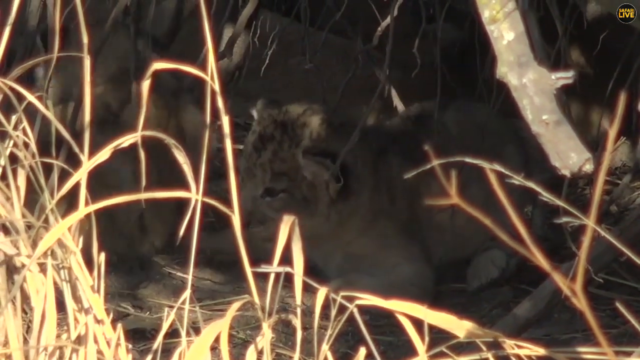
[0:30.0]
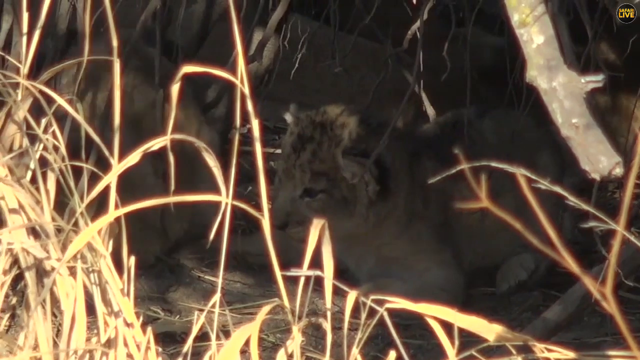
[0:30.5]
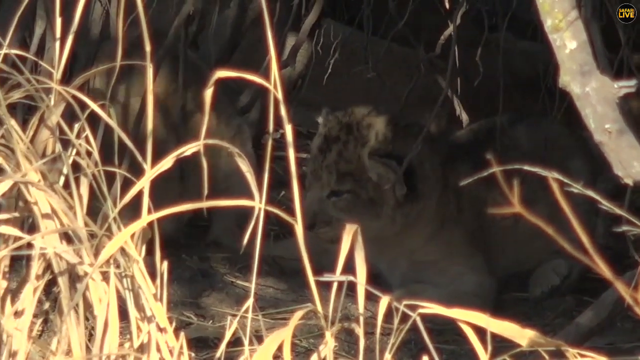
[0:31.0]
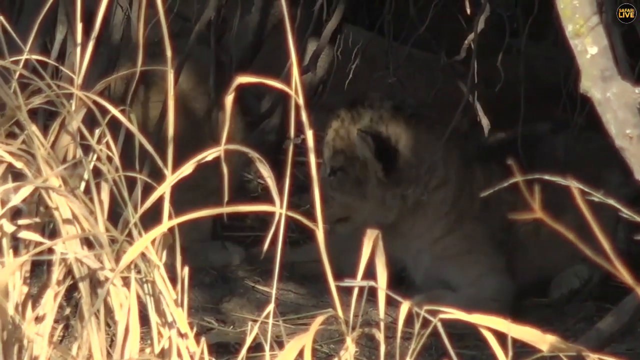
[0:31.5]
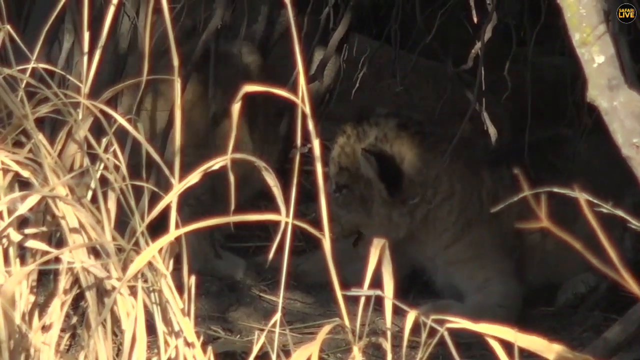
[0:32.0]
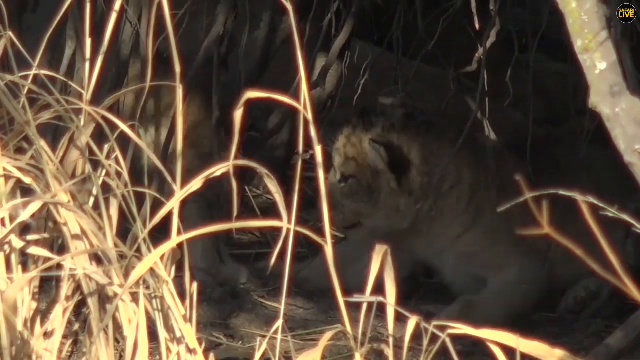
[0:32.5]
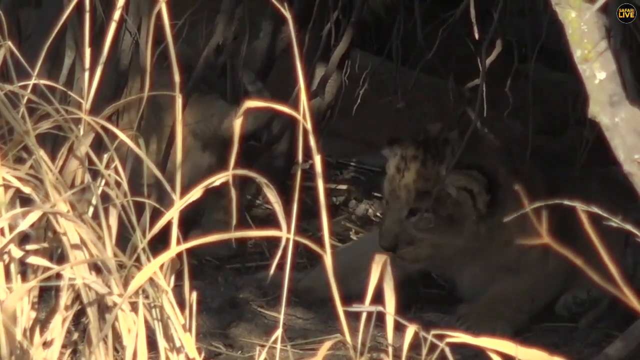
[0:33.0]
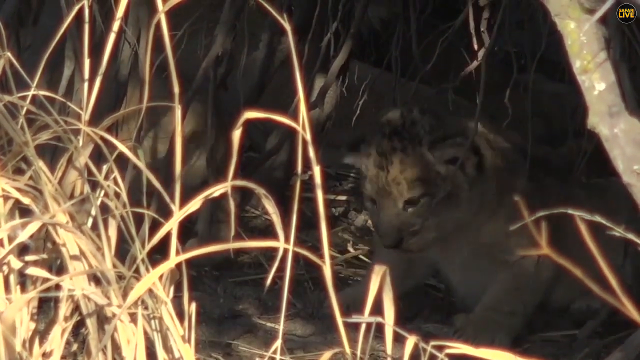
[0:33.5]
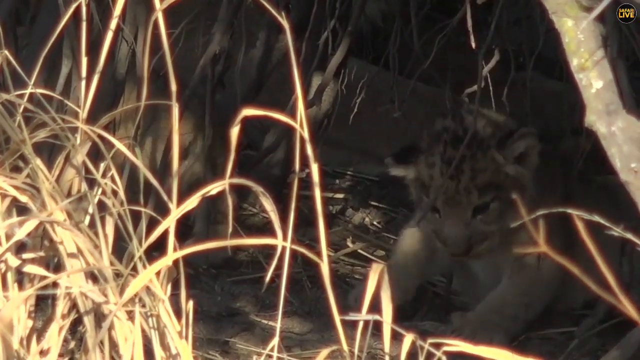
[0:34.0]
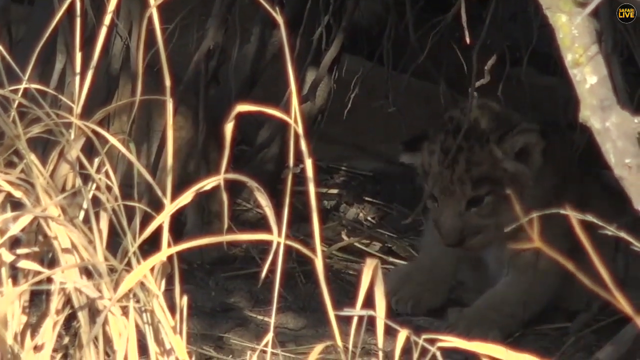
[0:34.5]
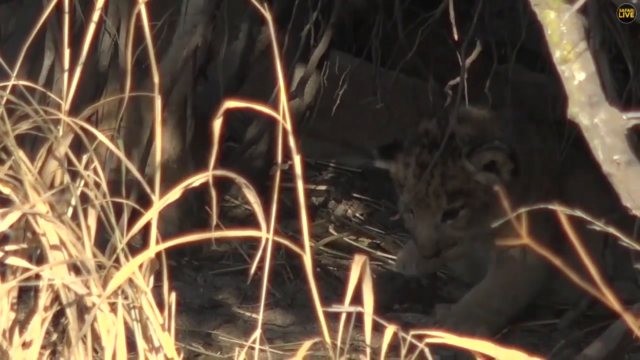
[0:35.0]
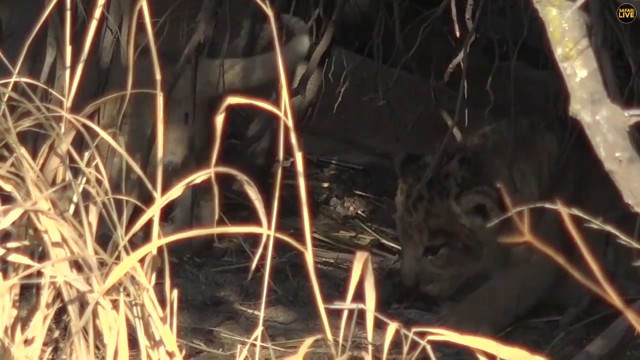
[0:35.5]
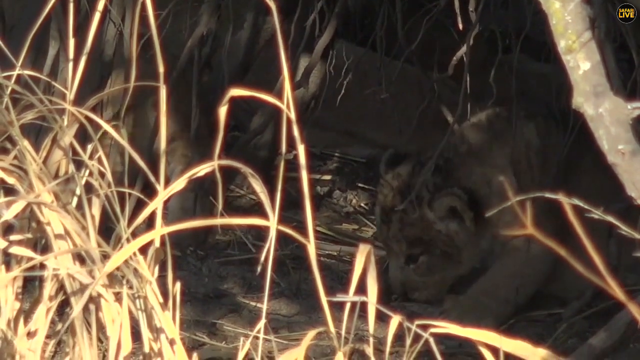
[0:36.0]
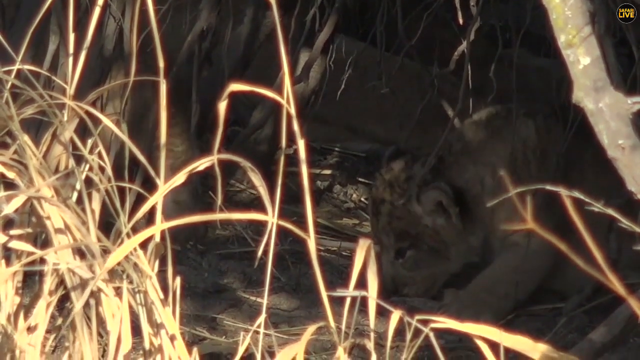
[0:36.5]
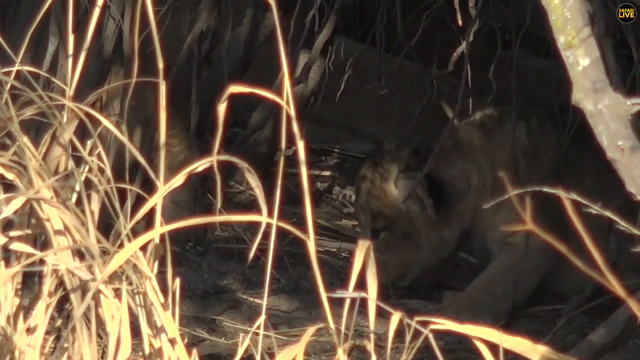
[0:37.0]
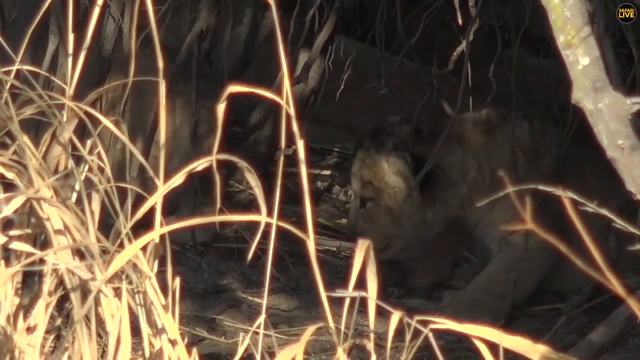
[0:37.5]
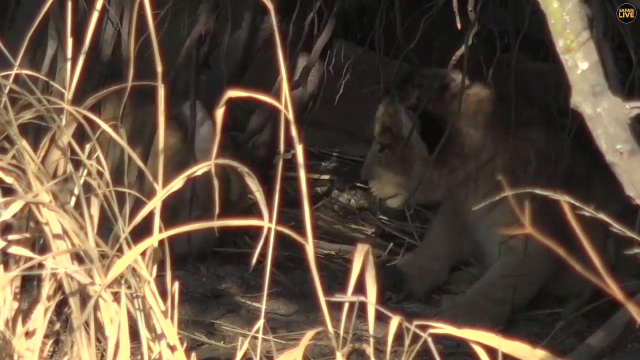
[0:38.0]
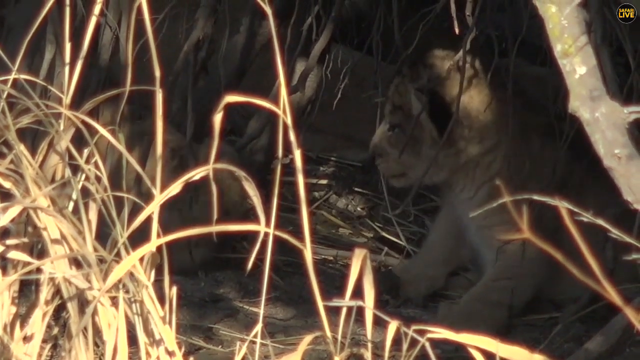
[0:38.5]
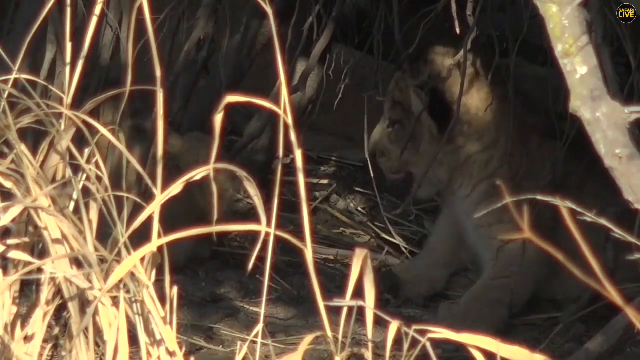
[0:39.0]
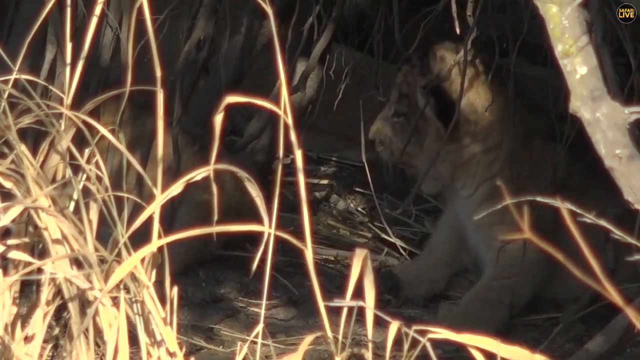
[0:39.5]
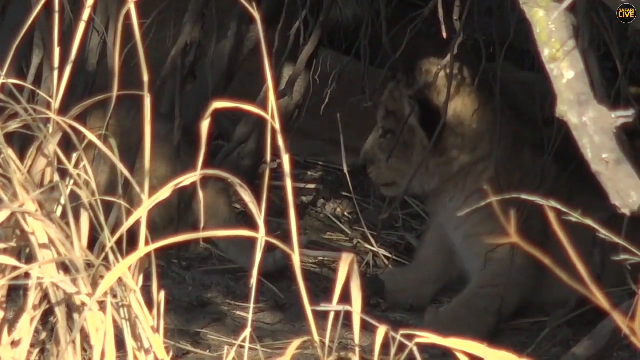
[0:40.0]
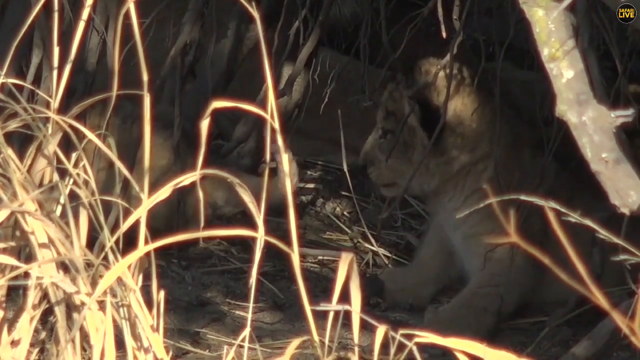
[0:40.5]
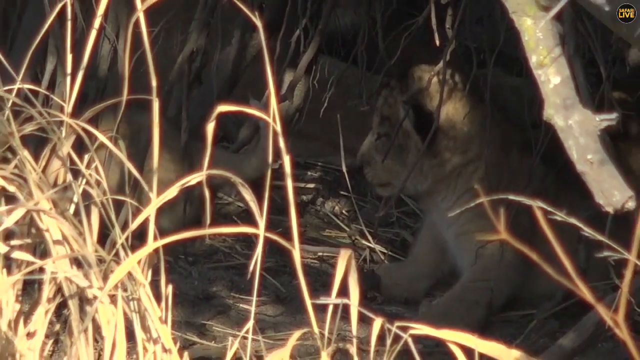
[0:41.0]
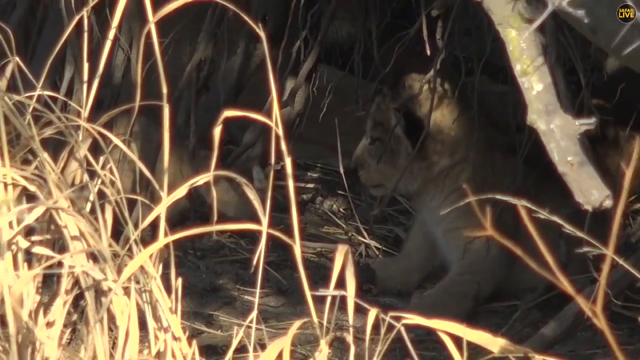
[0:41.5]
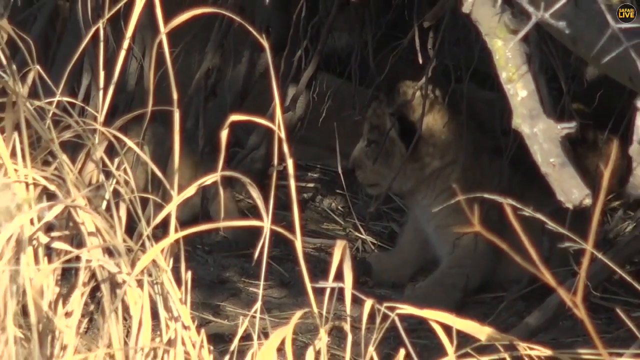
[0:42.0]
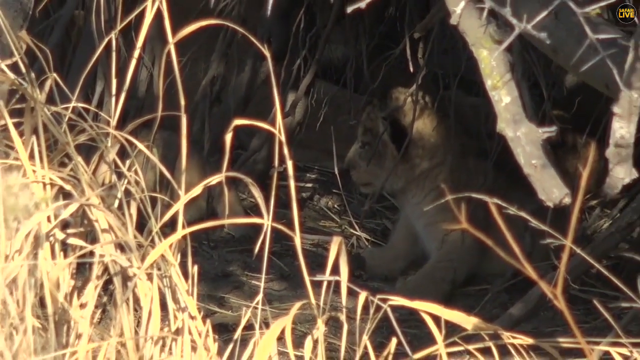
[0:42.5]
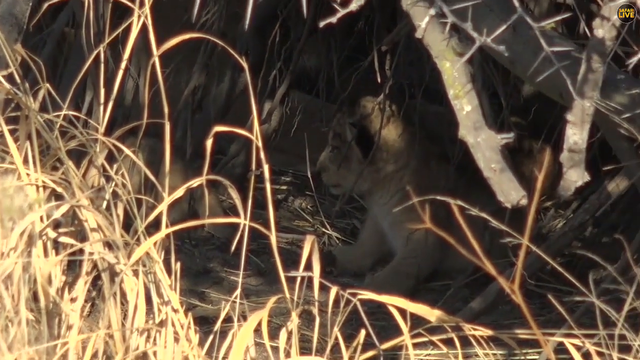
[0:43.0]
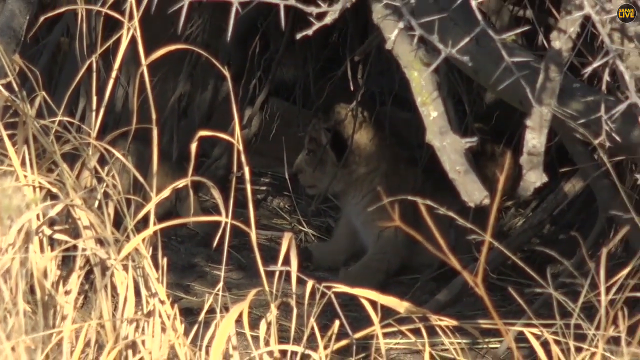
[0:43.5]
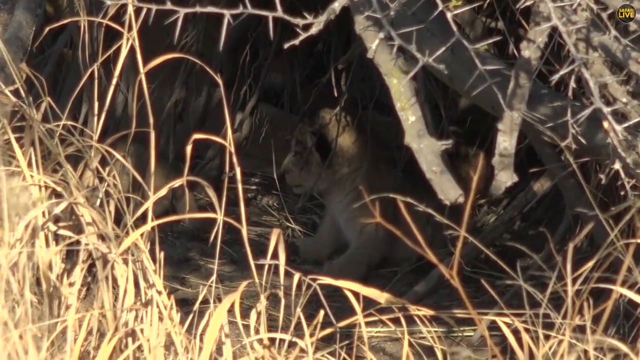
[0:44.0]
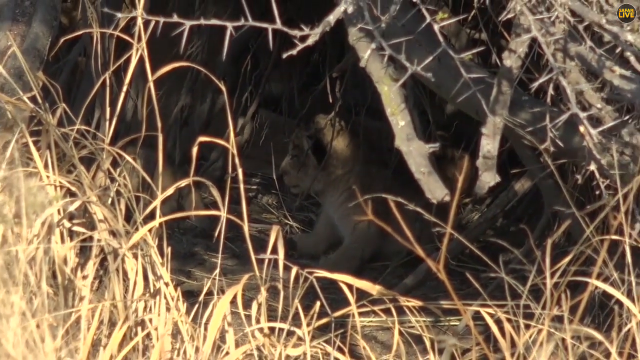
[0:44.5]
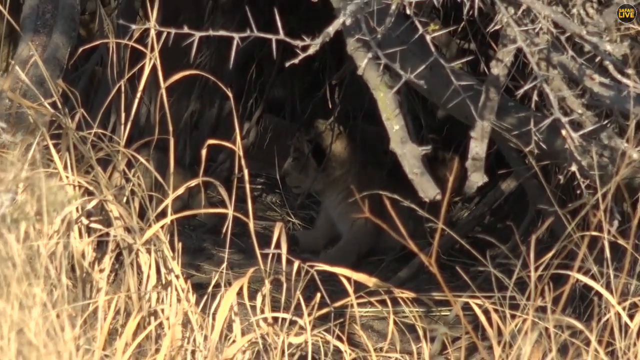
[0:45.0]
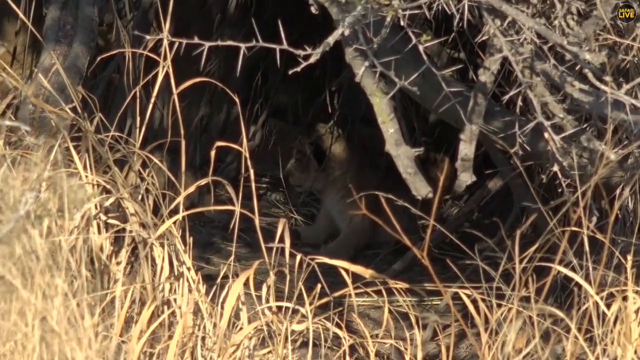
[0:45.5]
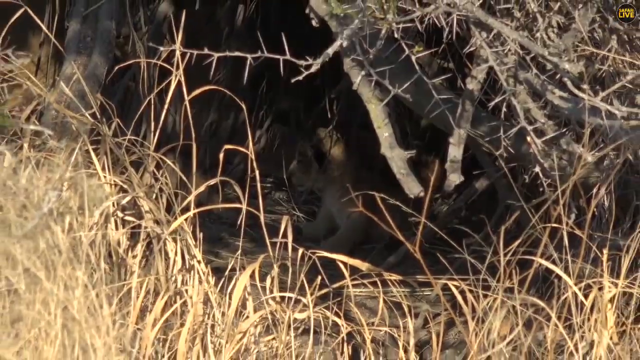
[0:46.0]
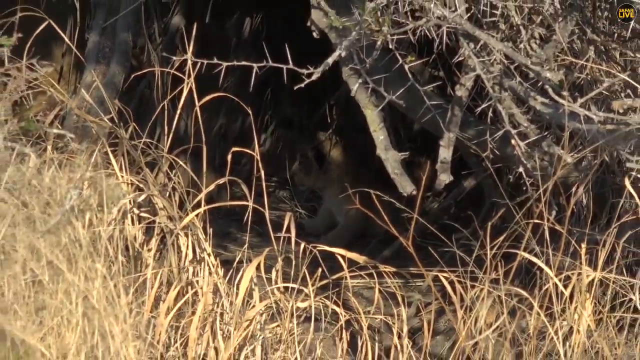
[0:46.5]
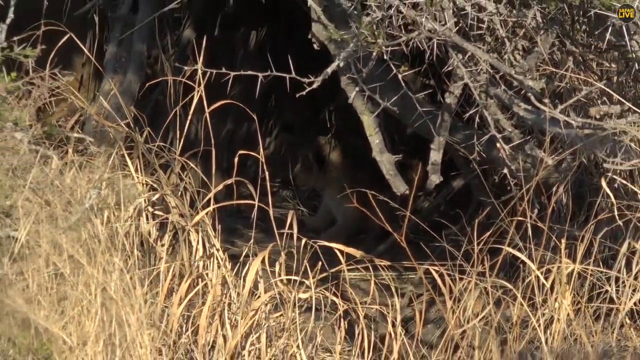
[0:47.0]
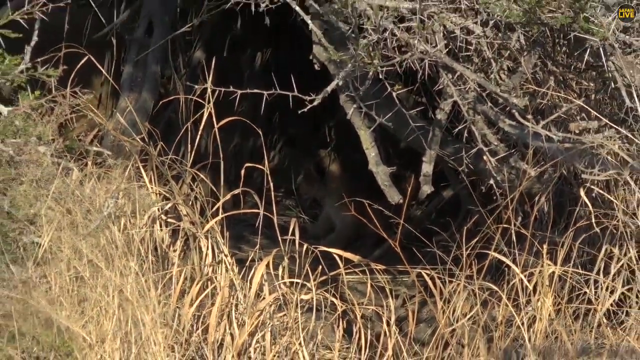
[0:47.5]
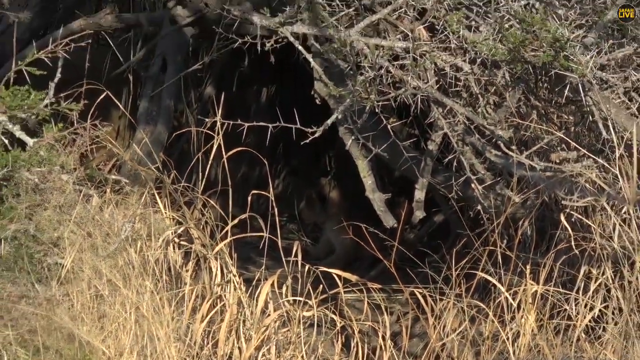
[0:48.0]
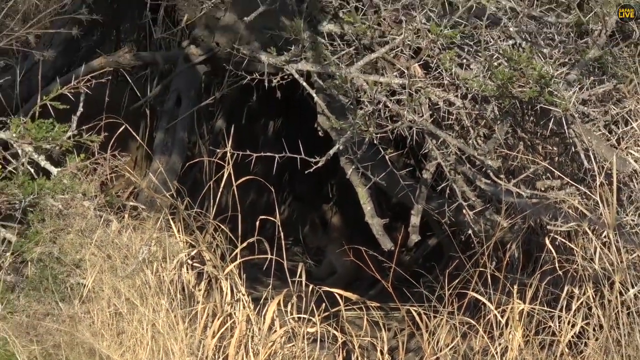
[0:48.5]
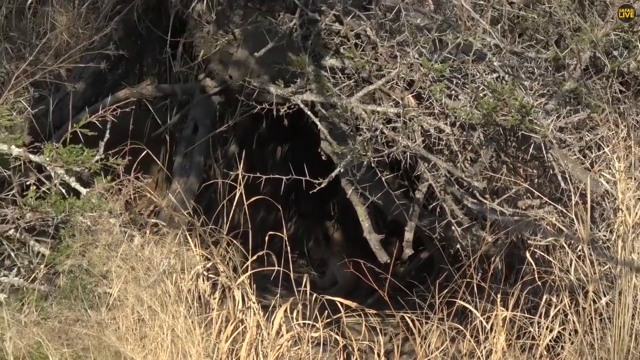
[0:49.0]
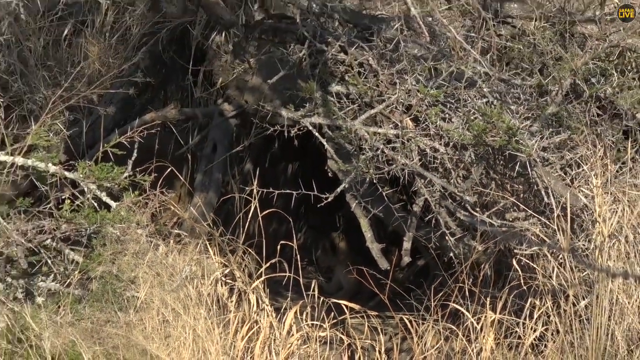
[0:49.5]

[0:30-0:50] A zoomed-in view shows two cheetah cubs inside what seems to be their hideout. It is covered with branches, part of it is covered by tall grass, and some of the branches are thinner but have thorns. One of the cubs slowly goes further inside the hideout until it can no longer be seen, leaving only one of the two cubs visible, lying down. Both cubs seem very relaxed. The camera then slowly zooms out to a wider view of where the hideout is, showing trees near it and a lot of branches around it, almost like a fence of branches covering the hideout completely. Without the zoom, the cubs inside are very difficult to see.